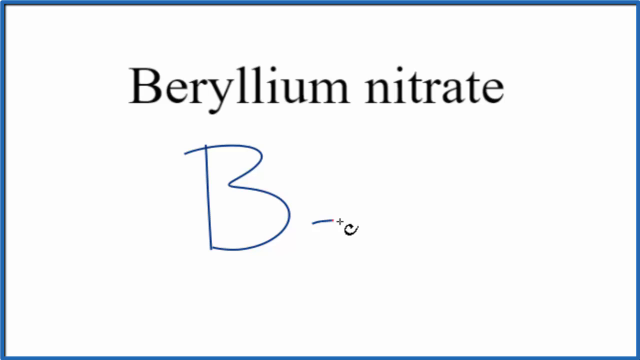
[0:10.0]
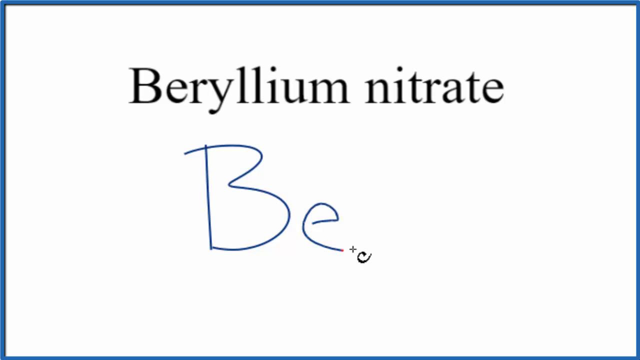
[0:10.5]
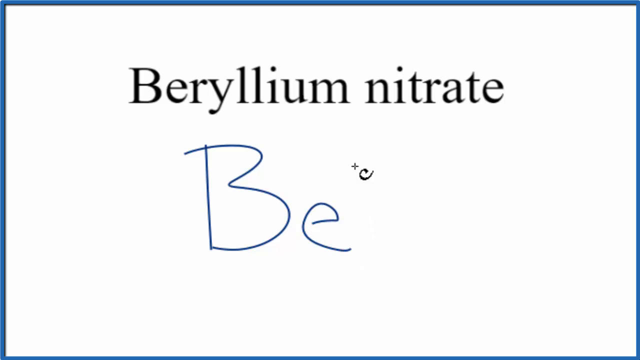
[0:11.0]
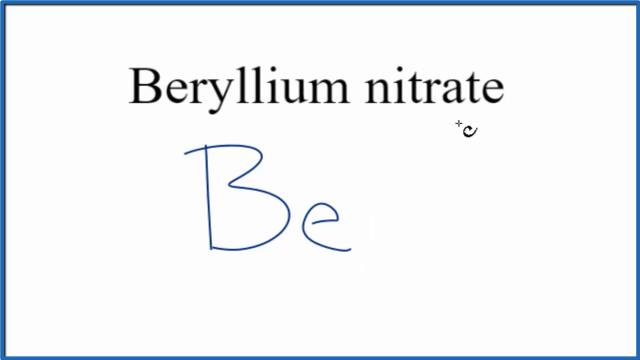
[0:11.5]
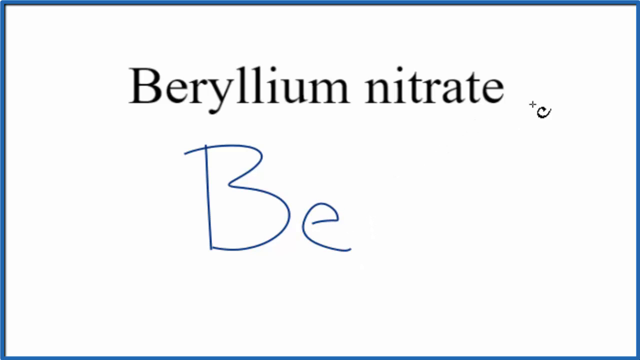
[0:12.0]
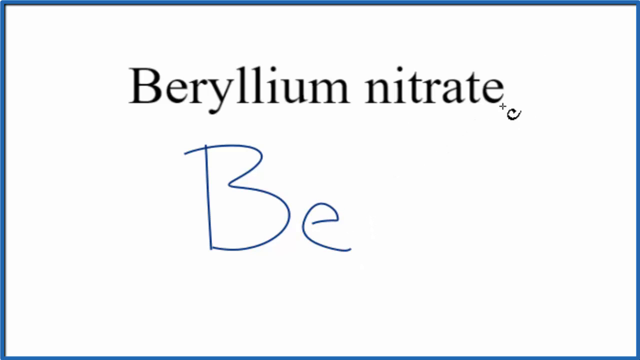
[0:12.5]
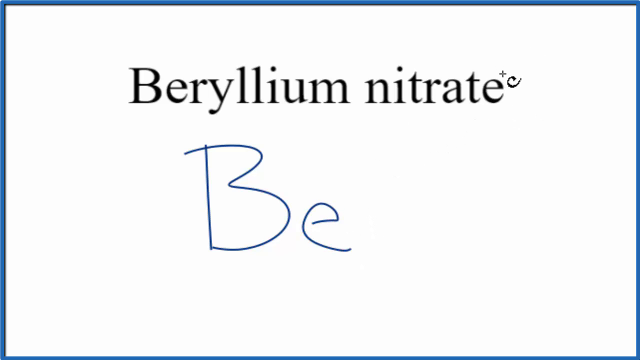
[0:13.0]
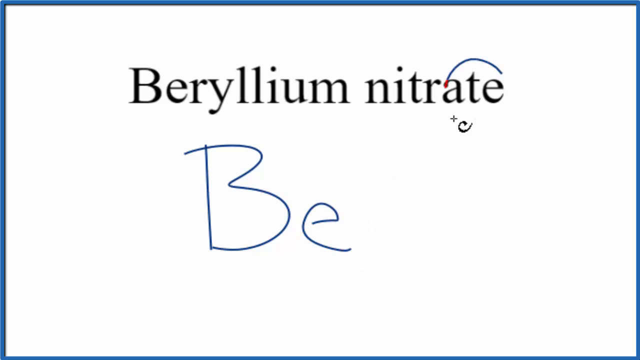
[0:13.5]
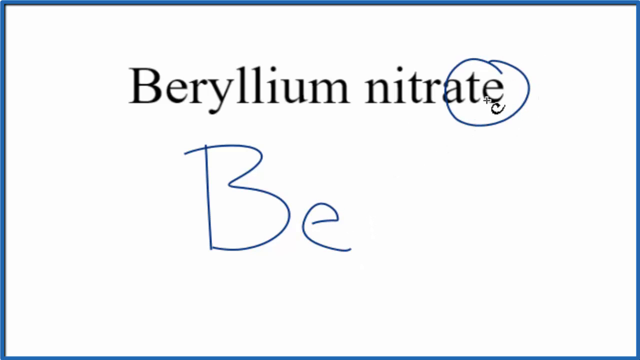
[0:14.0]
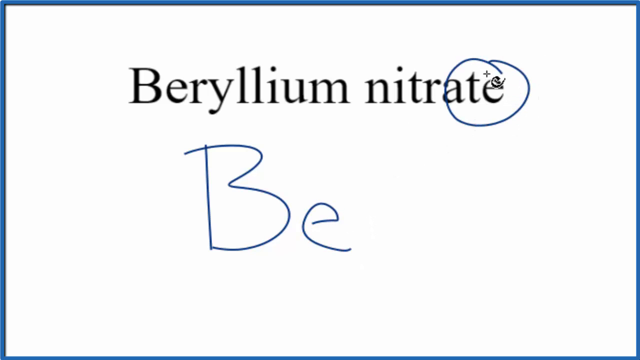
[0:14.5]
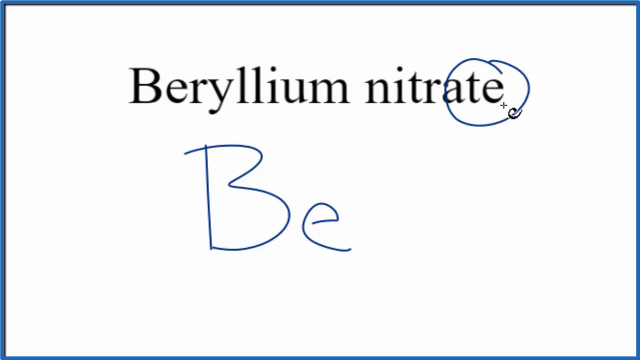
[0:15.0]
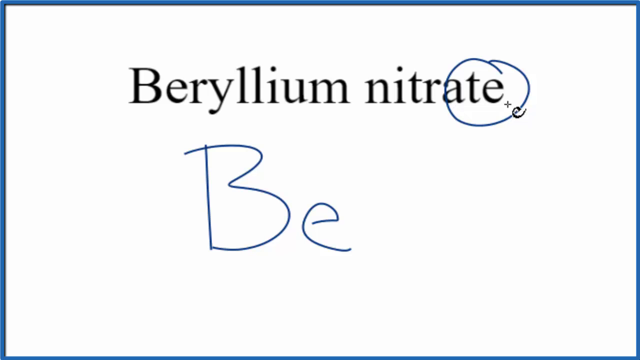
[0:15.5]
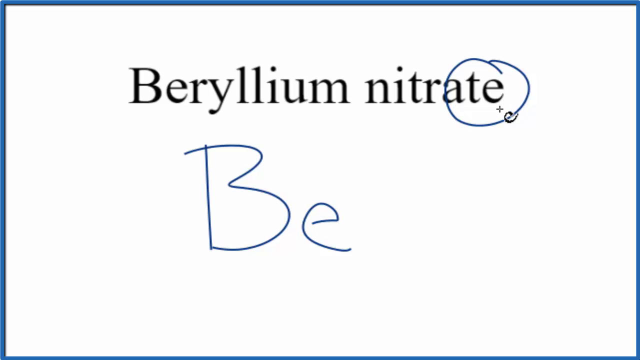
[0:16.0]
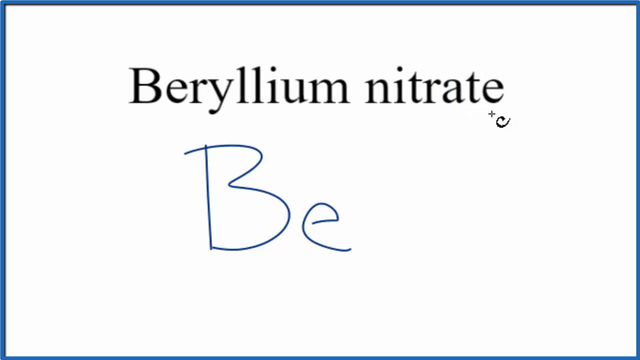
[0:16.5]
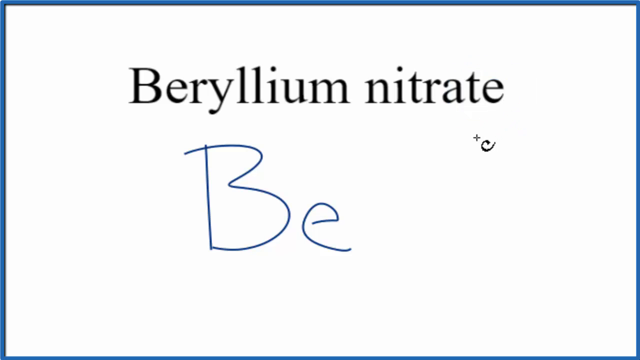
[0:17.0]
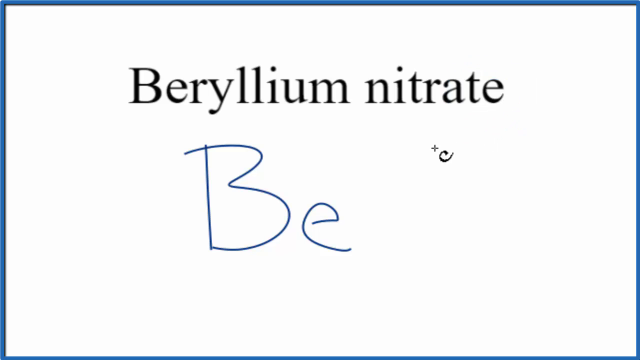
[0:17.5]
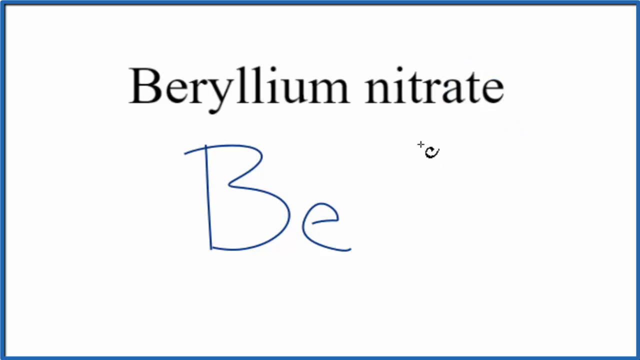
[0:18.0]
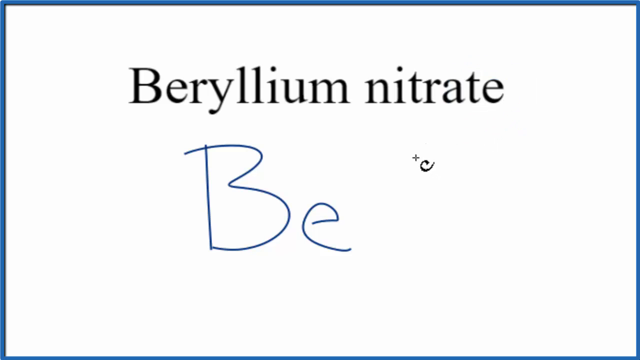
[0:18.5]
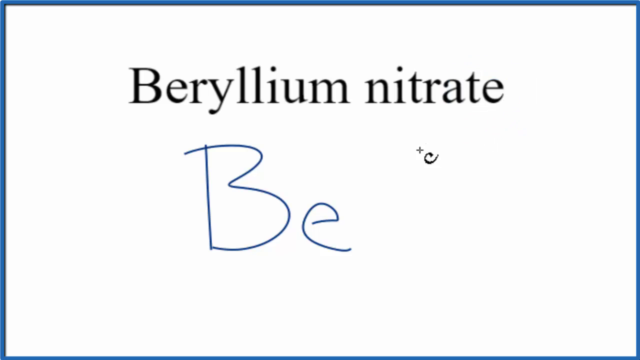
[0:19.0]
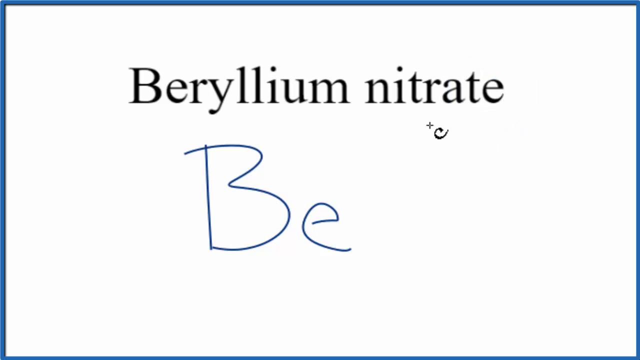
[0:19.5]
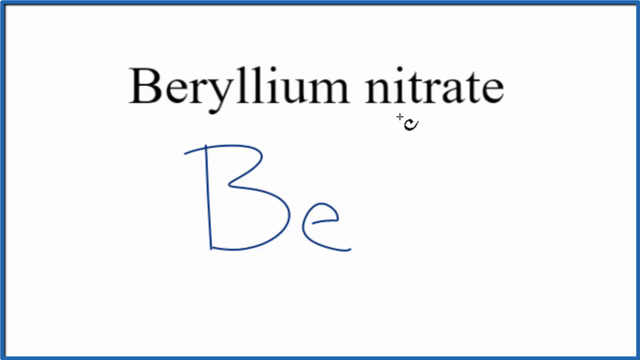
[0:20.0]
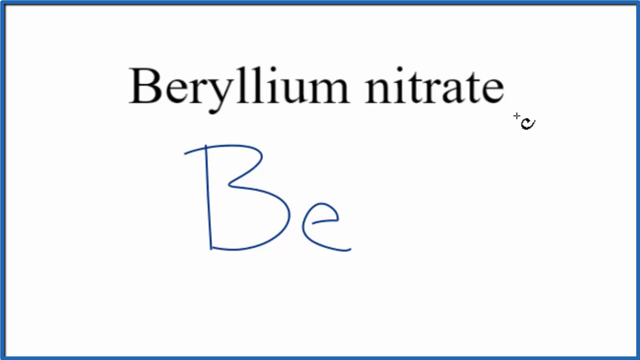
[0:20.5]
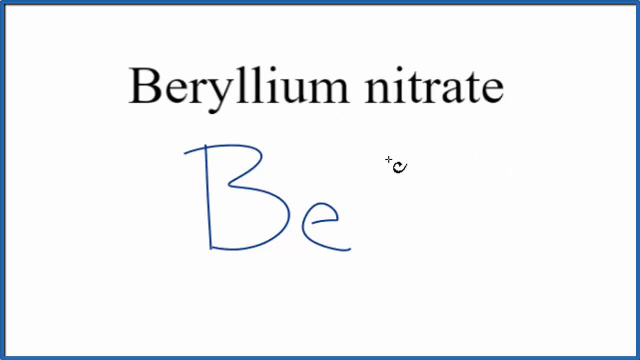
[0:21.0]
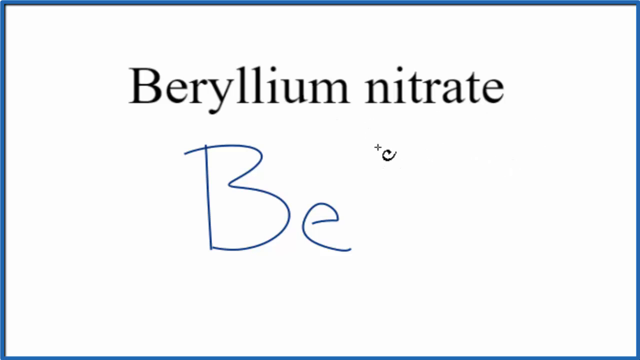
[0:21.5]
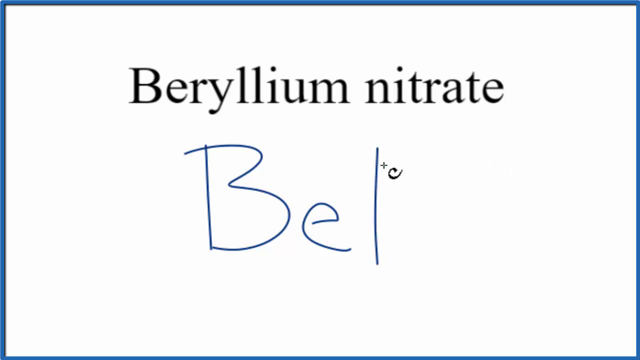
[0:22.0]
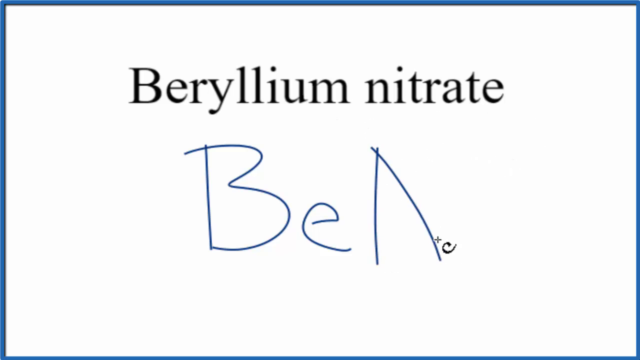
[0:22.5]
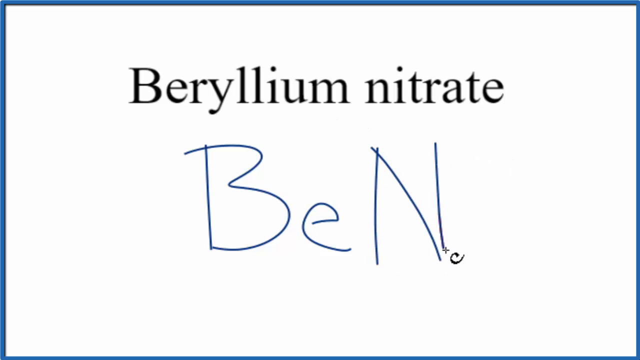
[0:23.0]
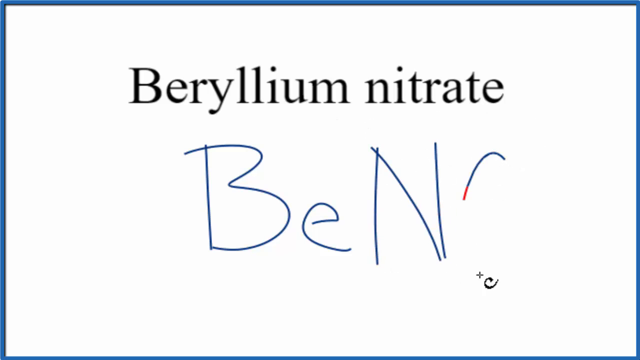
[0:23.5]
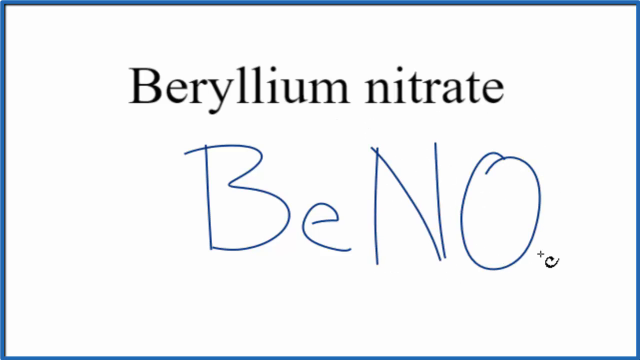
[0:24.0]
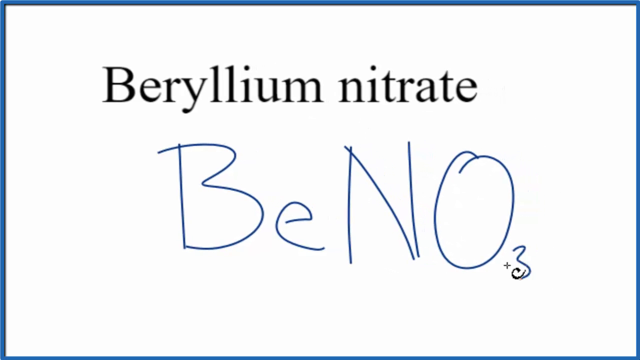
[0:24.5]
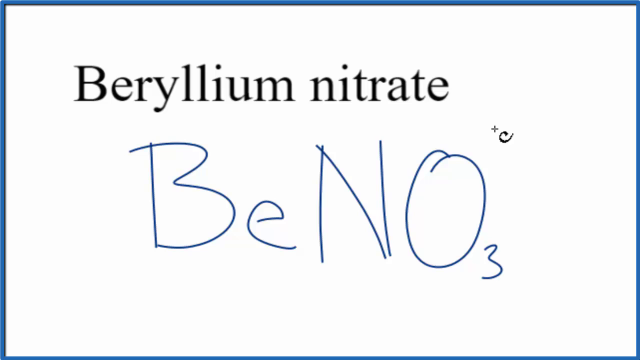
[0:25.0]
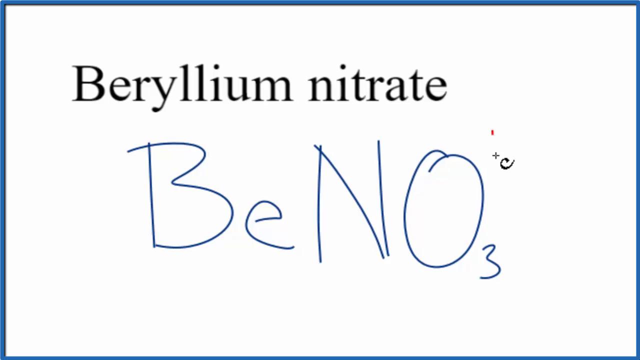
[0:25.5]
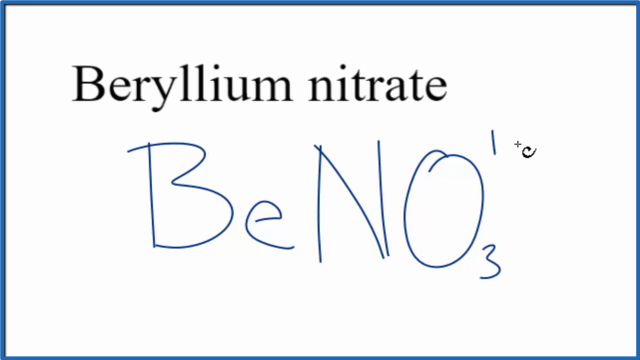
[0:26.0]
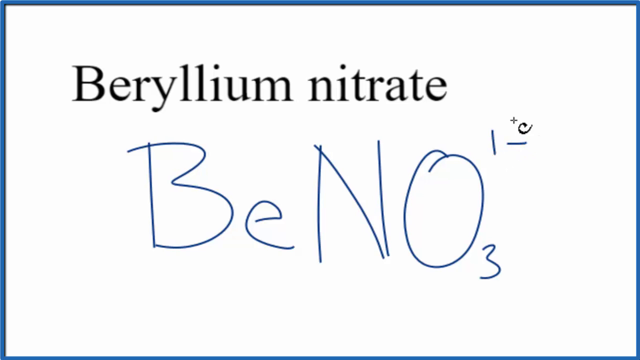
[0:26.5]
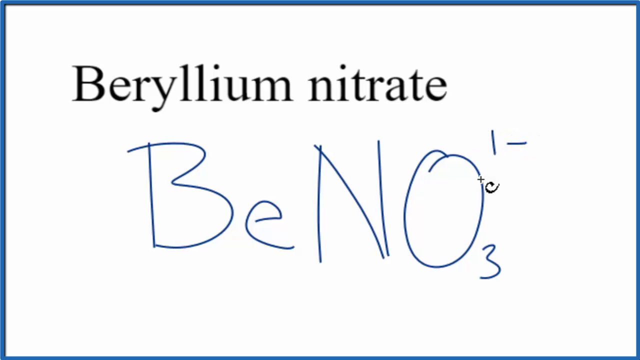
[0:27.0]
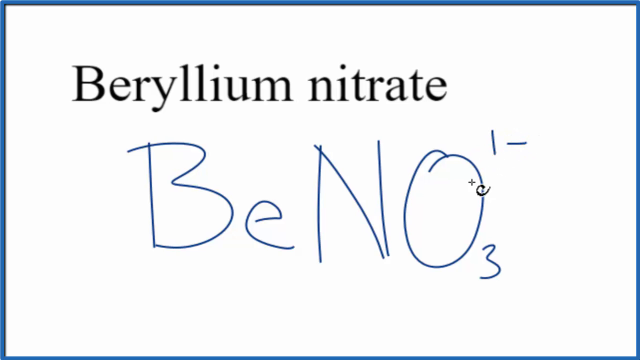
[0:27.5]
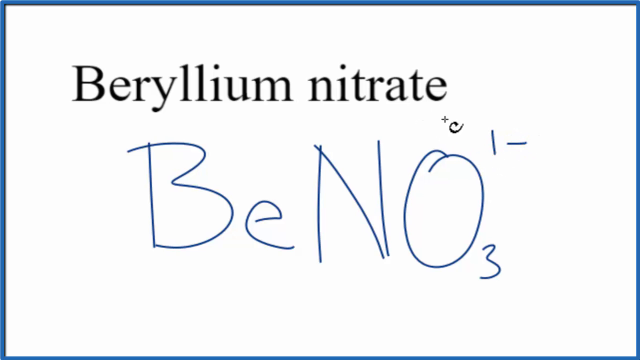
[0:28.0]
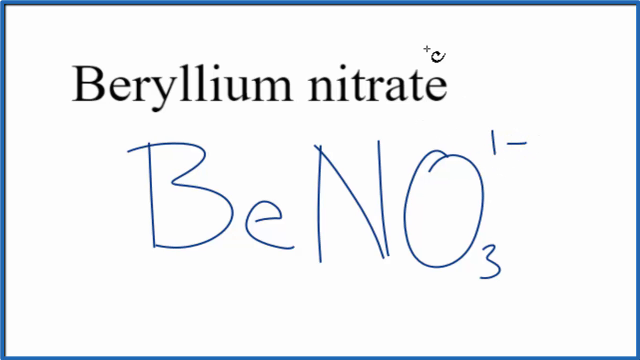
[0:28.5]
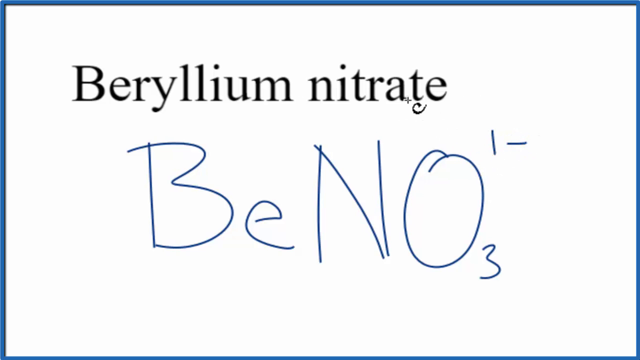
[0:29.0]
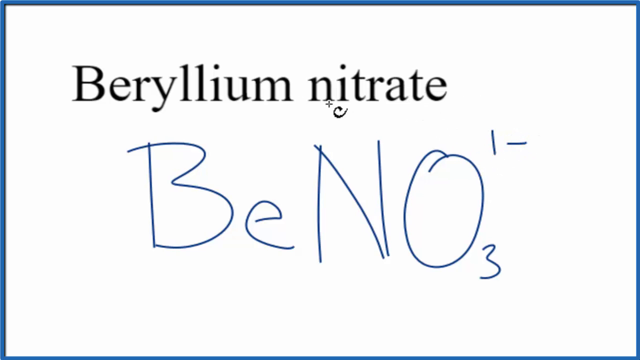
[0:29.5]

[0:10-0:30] On a white screen, the words "beryllium nitrate" are written at the top. A small cursor draws a wavy line under "beryllium" and a straight line under "nitrate," then writes a capital B and a little e. It circles the last three letters of "nitrate," pointing them out as it moves around. It then writes a capital N and a capital O, with a one and a dash above the O and a three at the bottom of the O, and circles the E. The cursor moves jerkily, bouncing around the screen, and repeatedly draws attention back to the word "nitrate." The screen scrolls sideways to give the cursor more room as it writes the NO, and it underlines "nitrate" again. The writing is somewhat sloppy and messy and looks more like handwriting than computer text: the B has an extra little tail at the top, two lines of the N are connected but the third one towards the bottom is not, and the O is sloppy with an extra little piece.